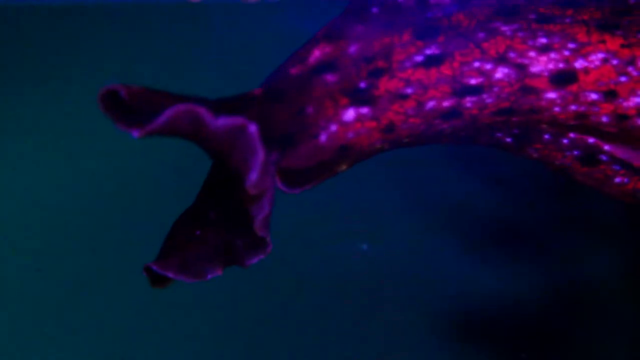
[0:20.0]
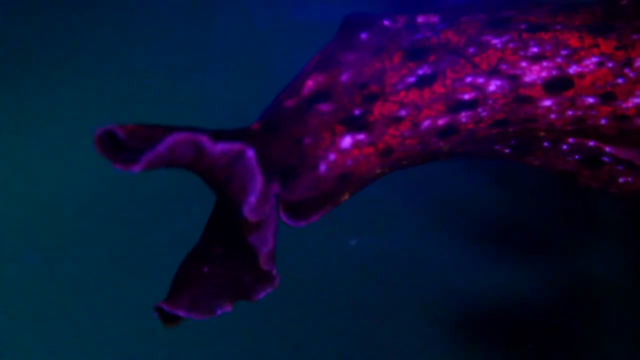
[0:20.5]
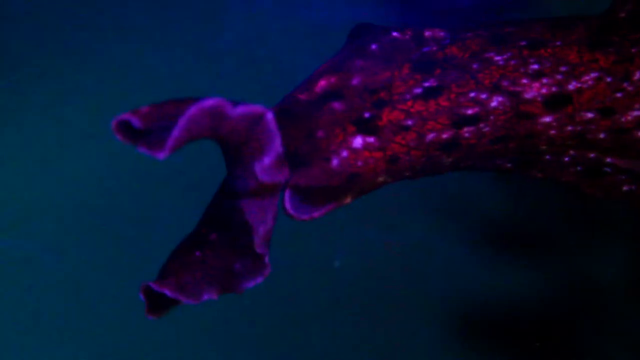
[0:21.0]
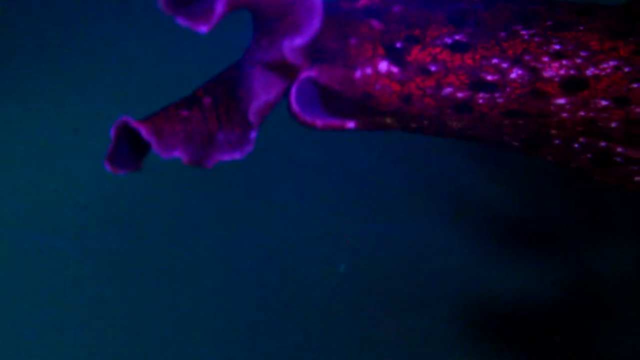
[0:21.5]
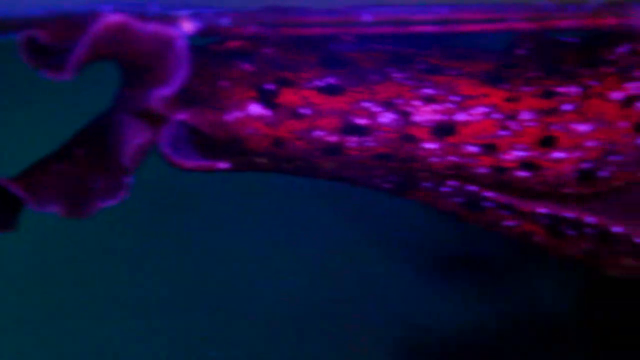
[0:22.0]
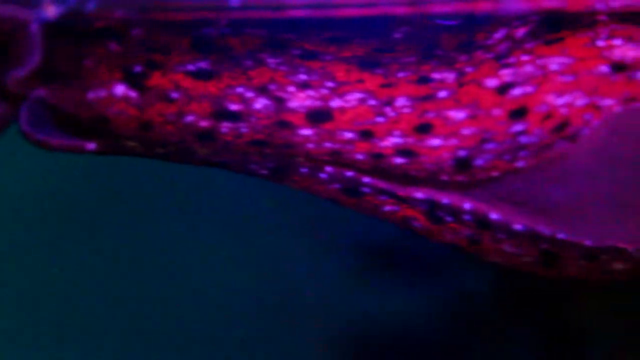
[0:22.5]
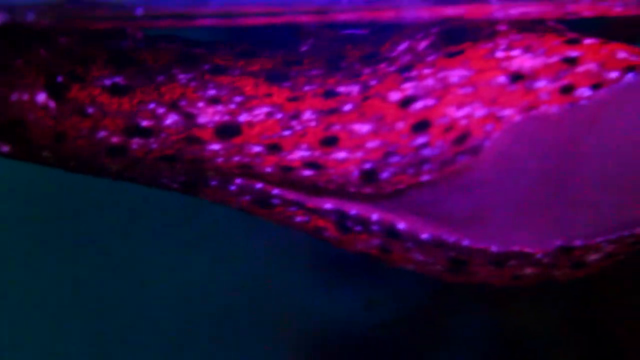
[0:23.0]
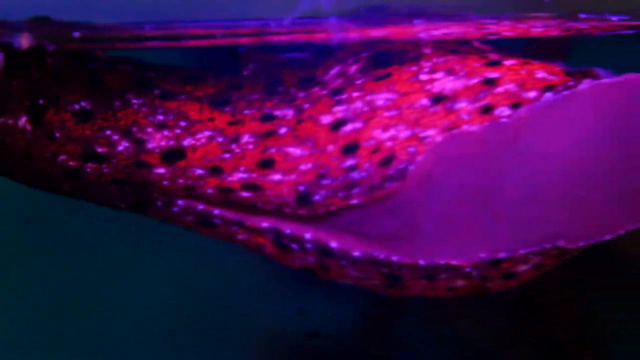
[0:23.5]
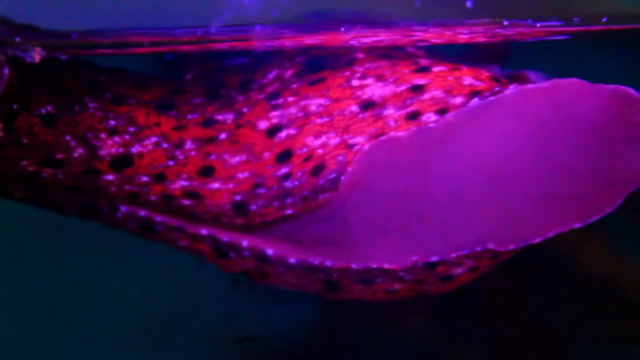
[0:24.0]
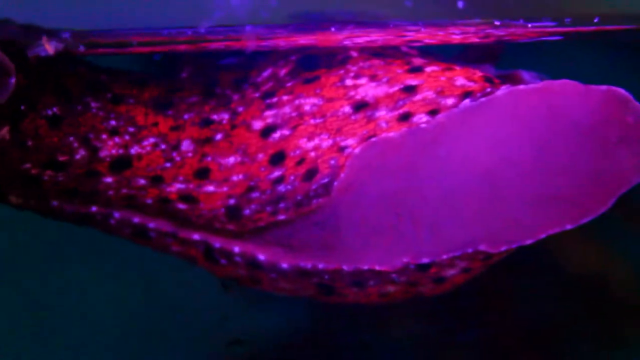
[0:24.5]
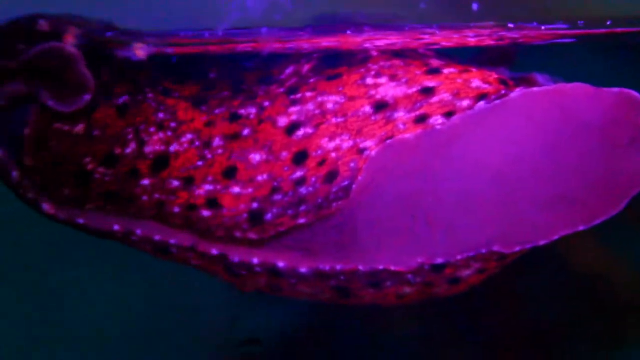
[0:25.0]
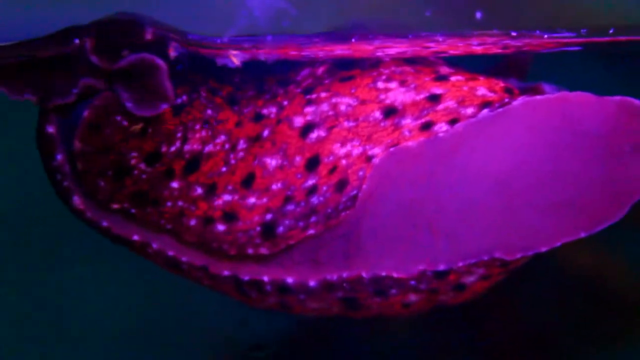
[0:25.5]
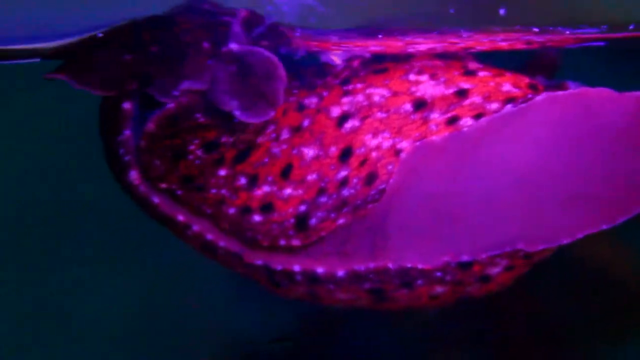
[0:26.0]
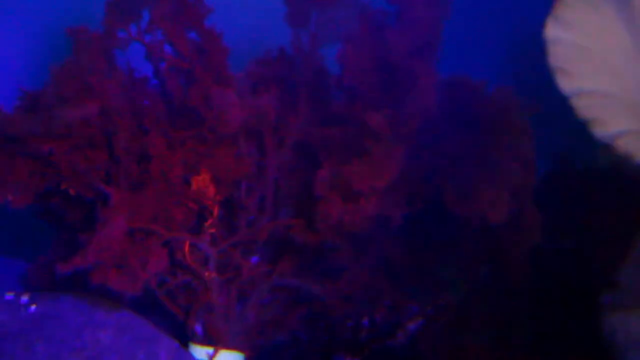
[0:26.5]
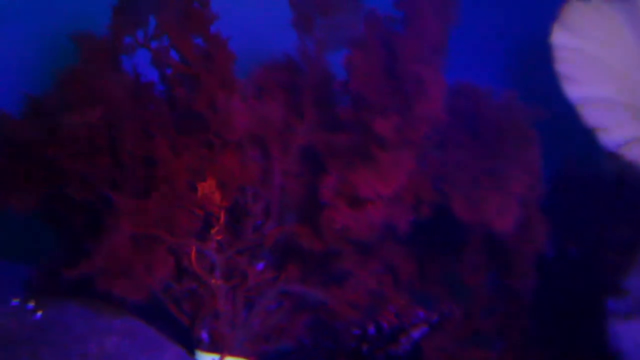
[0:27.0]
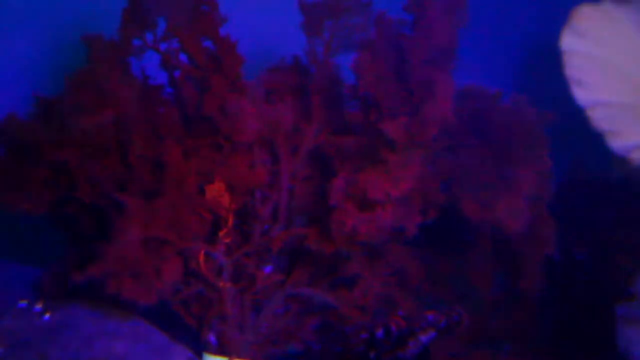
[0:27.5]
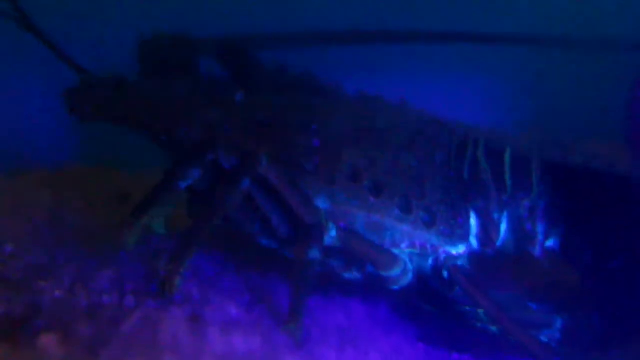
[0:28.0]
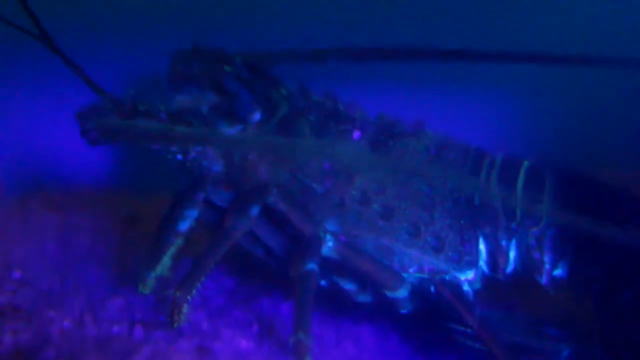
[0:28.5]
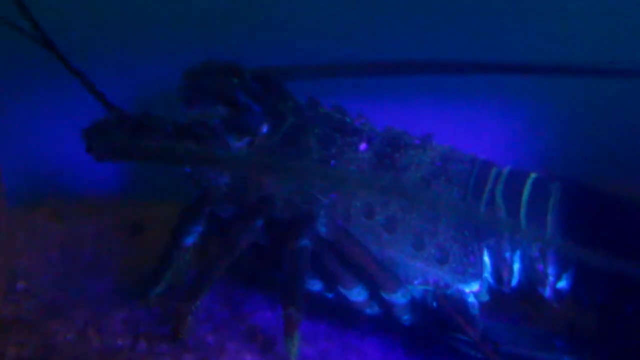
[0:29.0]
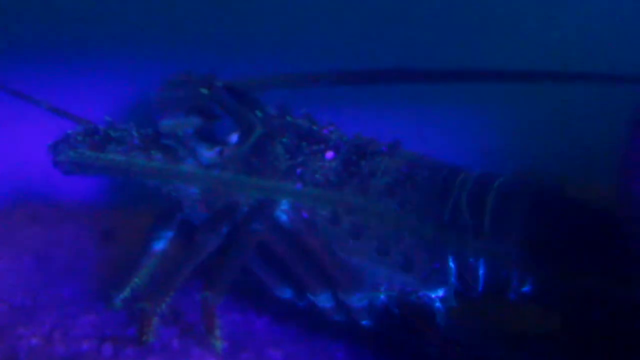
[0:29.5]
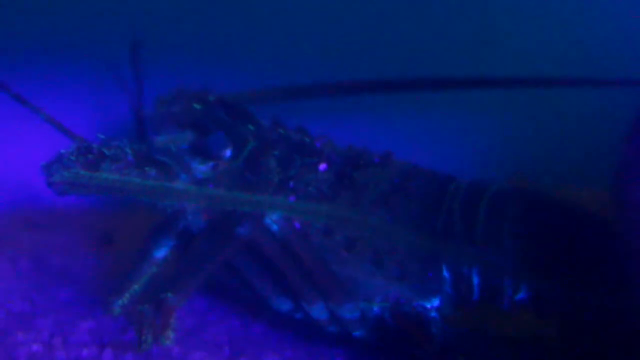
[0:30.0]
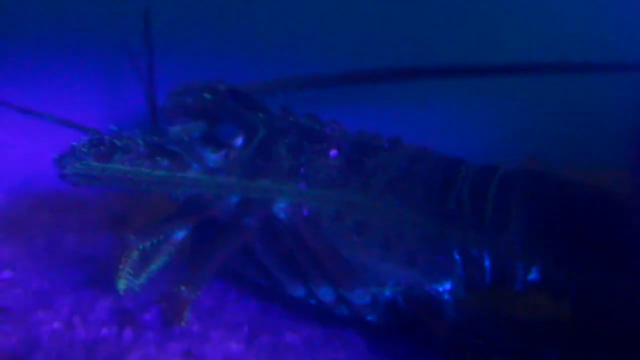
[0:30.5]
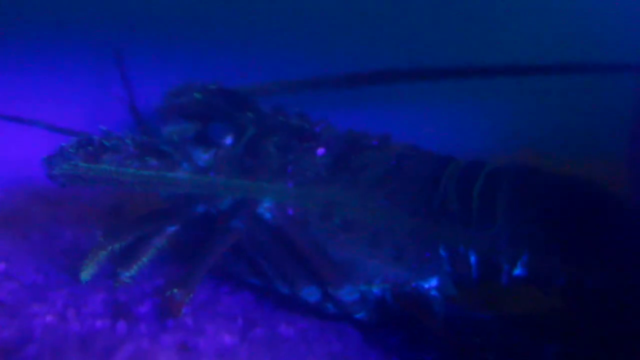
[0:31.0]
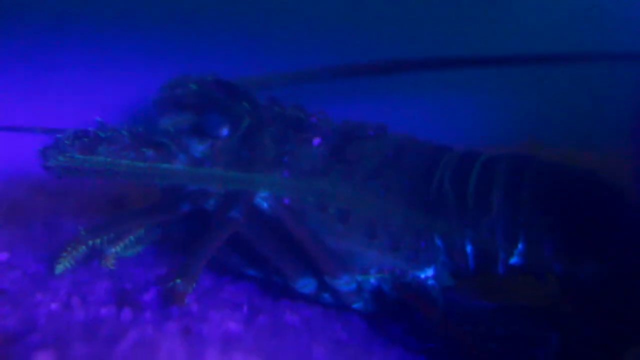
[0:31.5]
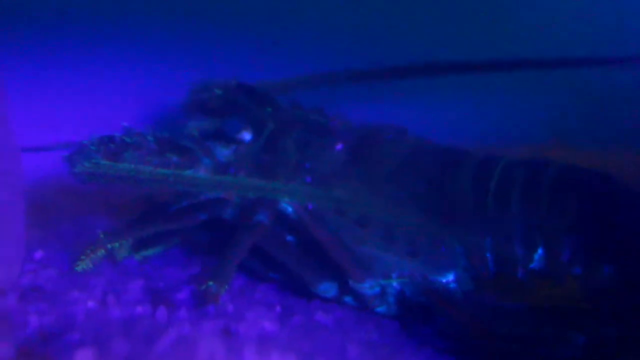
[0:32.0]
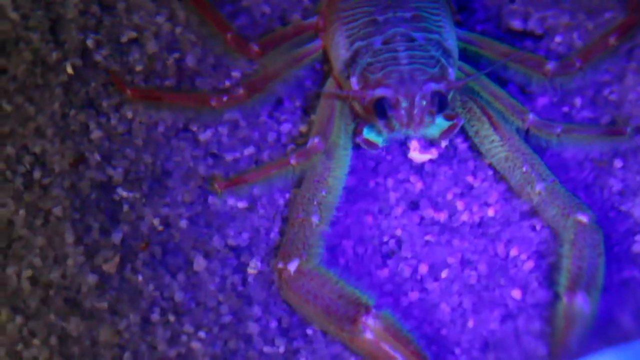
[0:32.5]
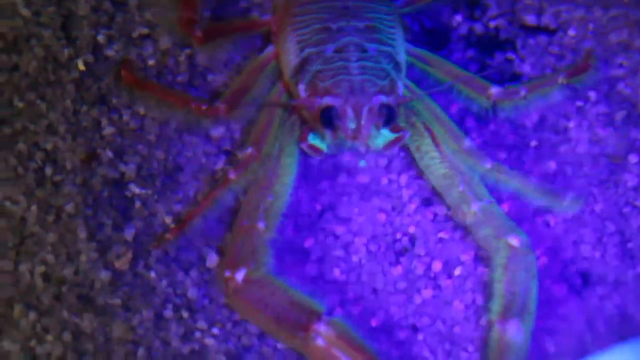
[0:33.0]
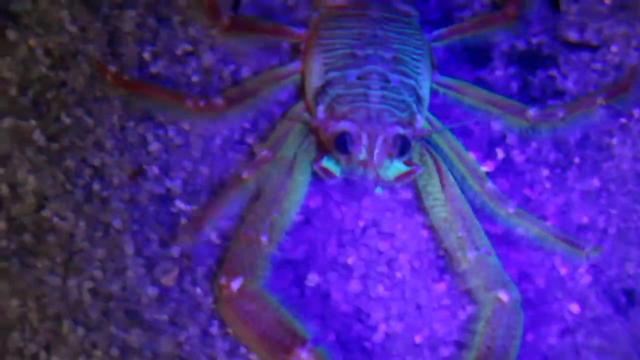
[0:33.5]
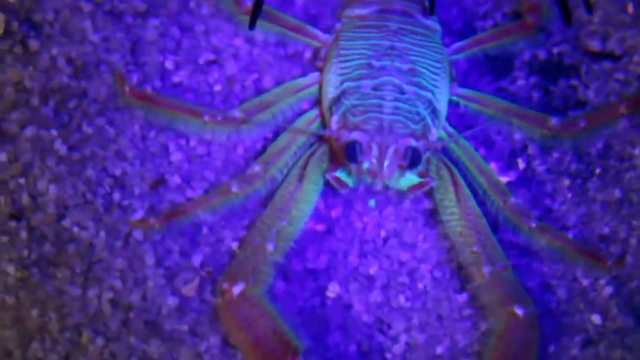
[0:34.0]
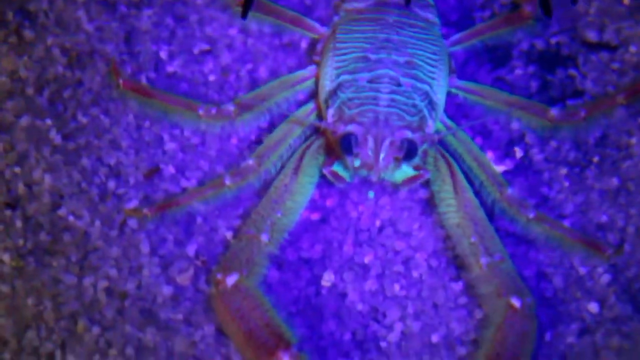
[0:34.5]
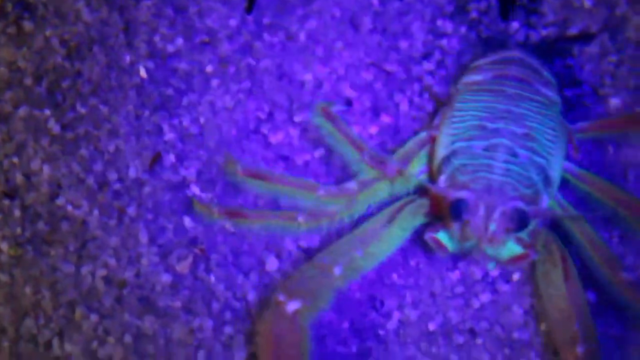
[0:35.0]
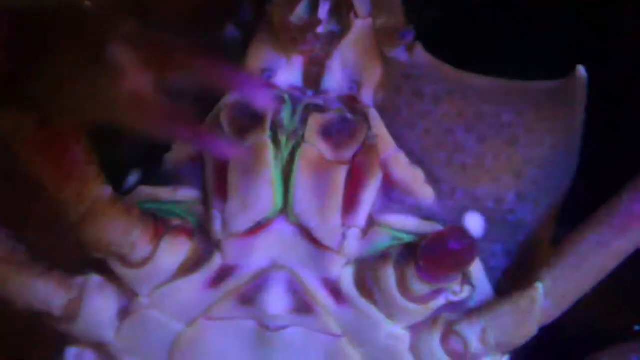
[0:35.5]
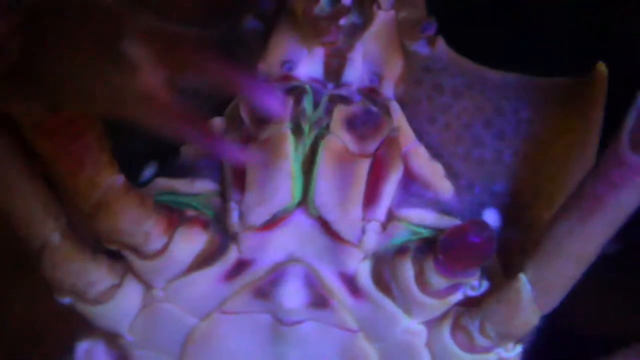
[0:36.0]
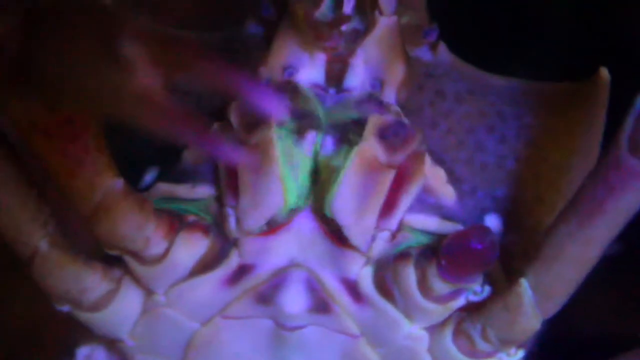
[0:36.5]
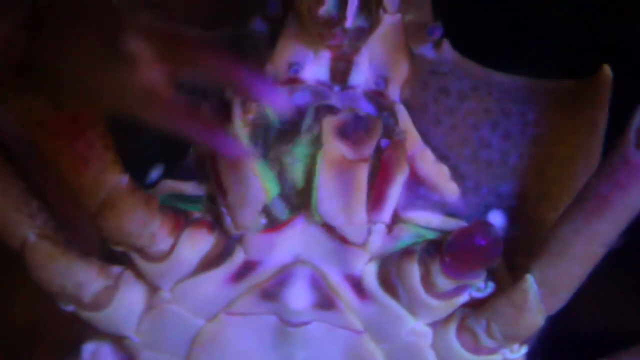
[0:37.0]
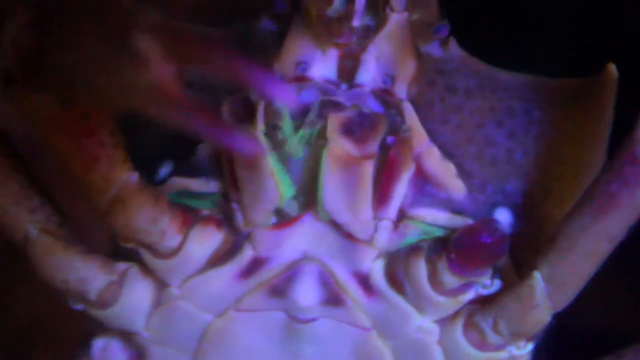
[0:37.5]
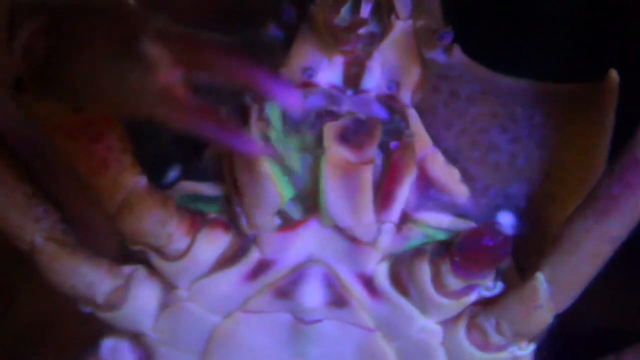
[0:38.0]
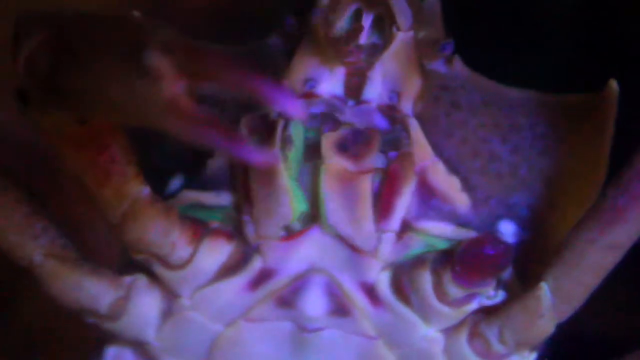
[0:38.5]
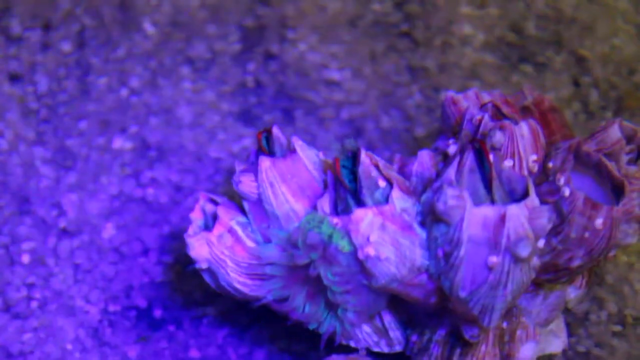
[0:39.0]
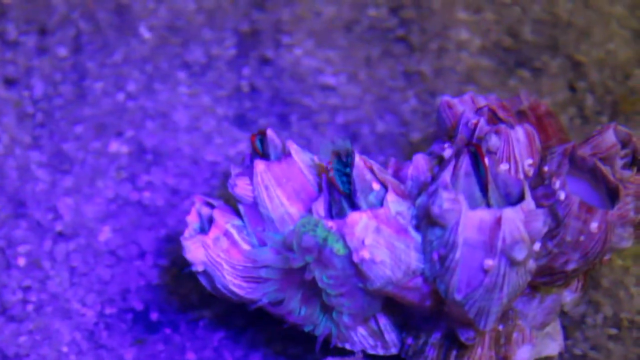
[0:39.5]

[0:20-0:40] An aquatic animal is shown in the dark under a purple light. Different aquatic animals appear, with their details captured in purple, and the movement of an animal is visible; one looks like a snail, and there is another animal as well. The setting is dark and the animals cannot be seen clearly, but their movement can be made out.